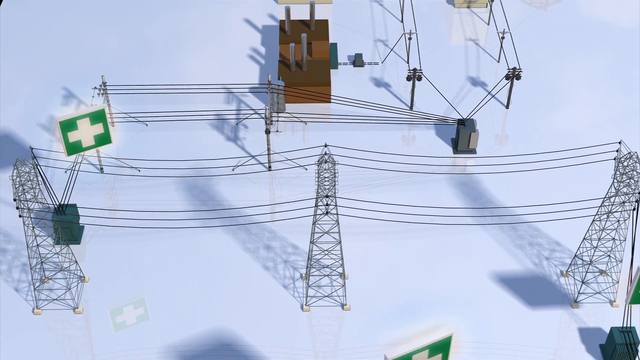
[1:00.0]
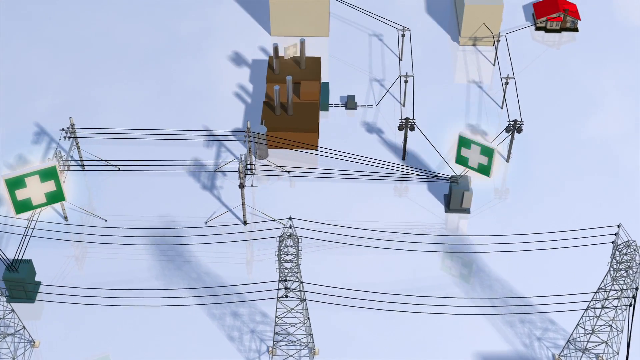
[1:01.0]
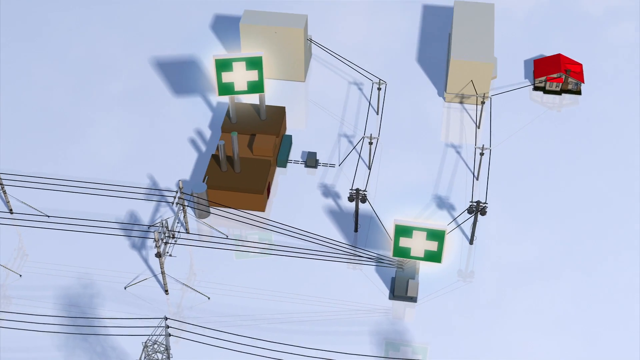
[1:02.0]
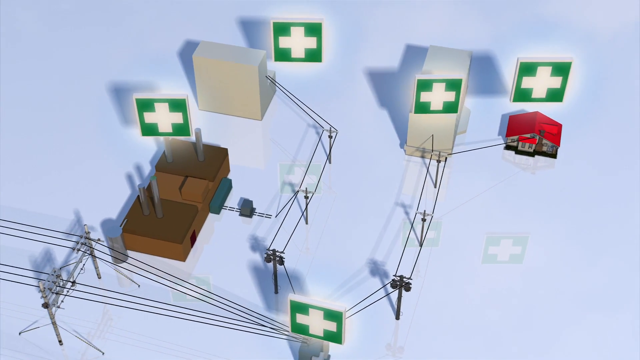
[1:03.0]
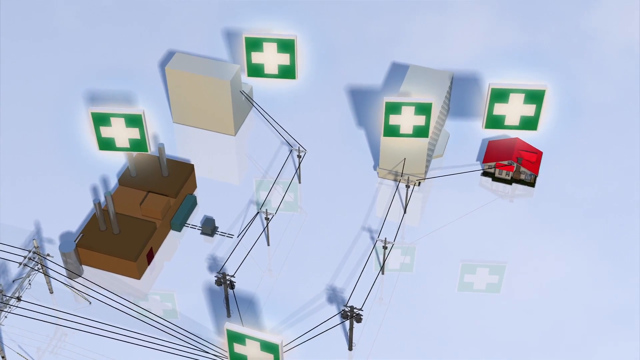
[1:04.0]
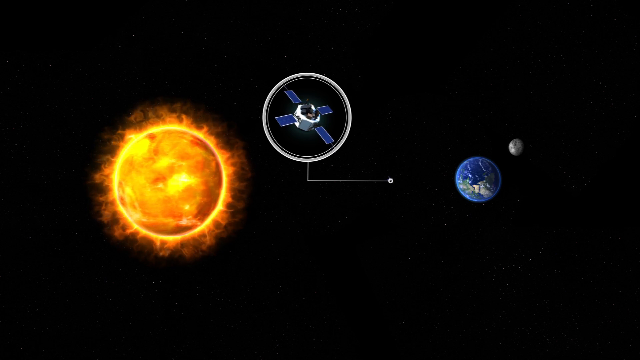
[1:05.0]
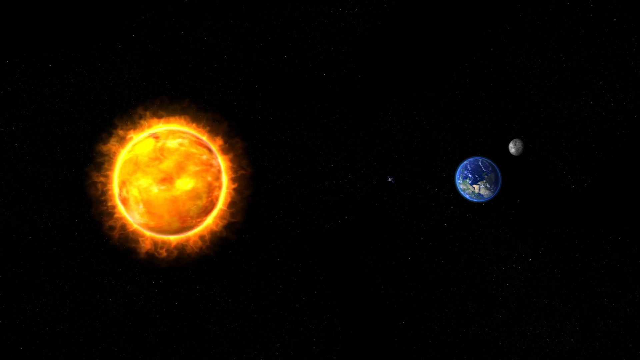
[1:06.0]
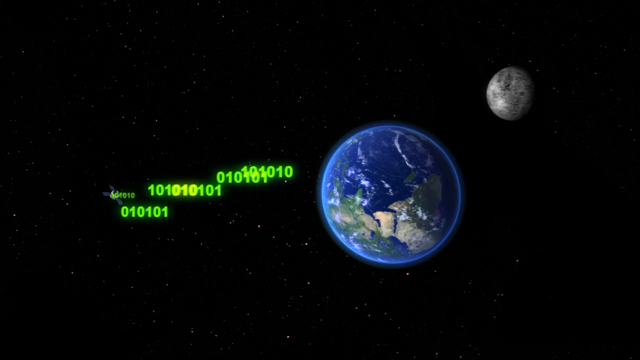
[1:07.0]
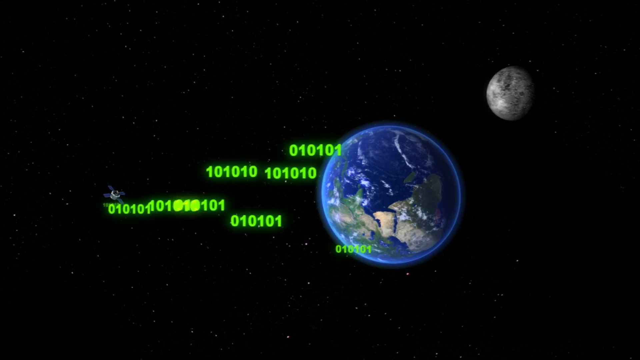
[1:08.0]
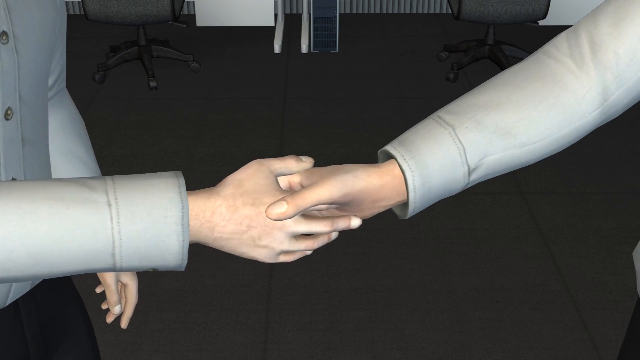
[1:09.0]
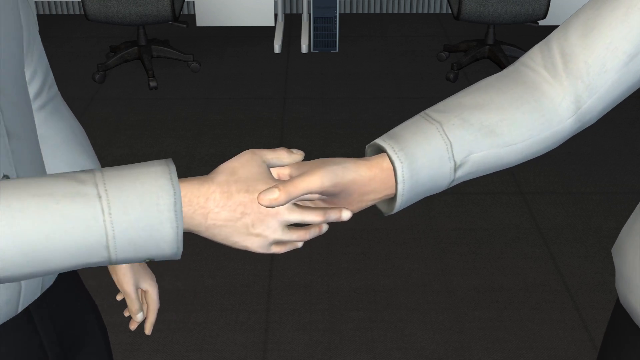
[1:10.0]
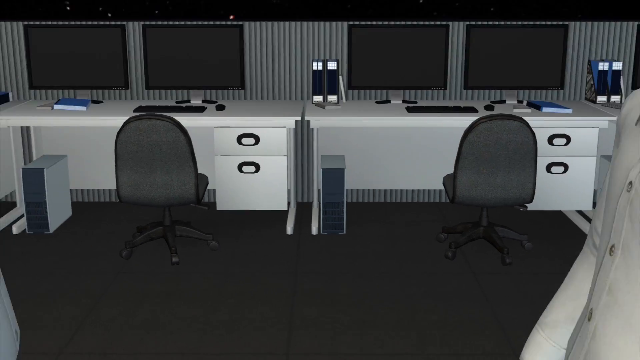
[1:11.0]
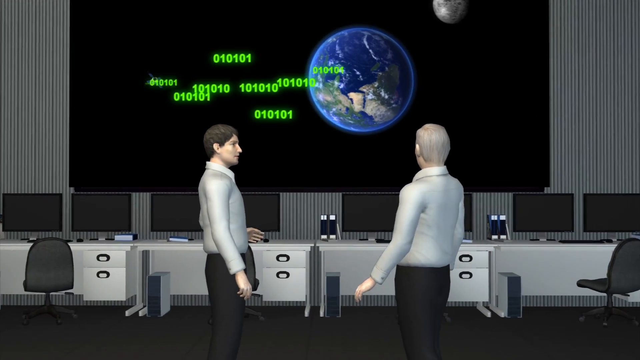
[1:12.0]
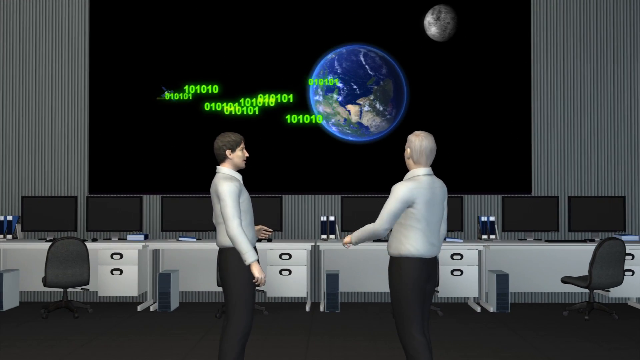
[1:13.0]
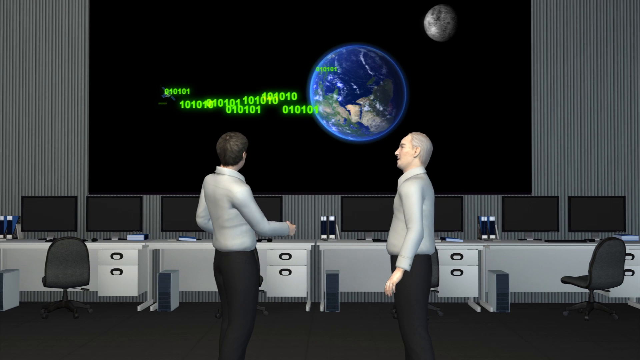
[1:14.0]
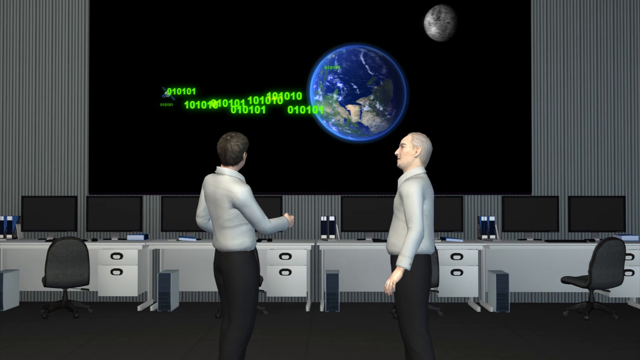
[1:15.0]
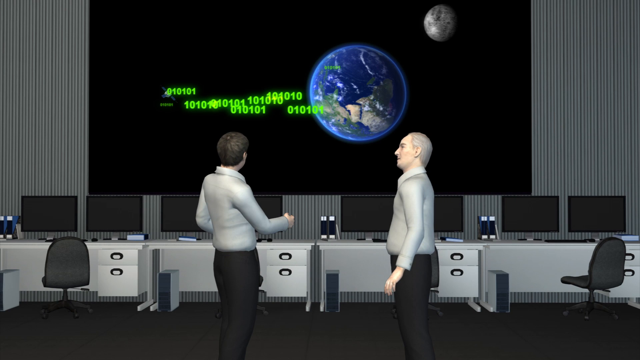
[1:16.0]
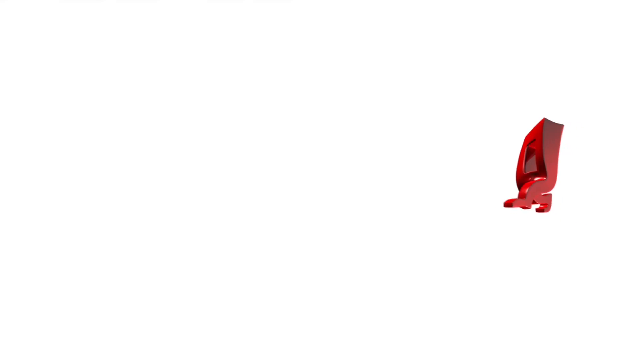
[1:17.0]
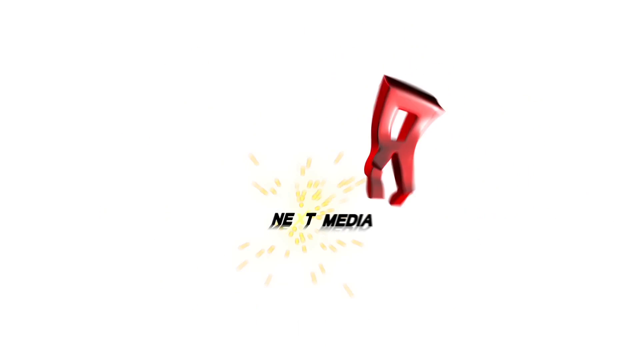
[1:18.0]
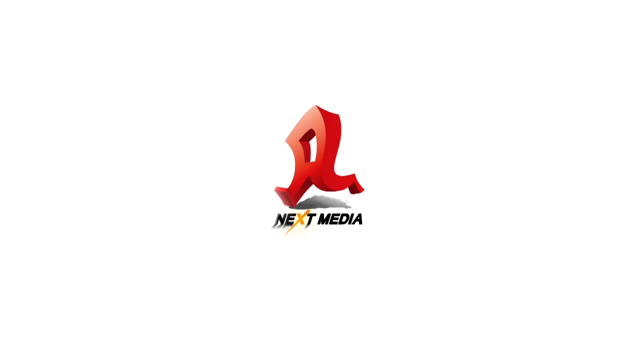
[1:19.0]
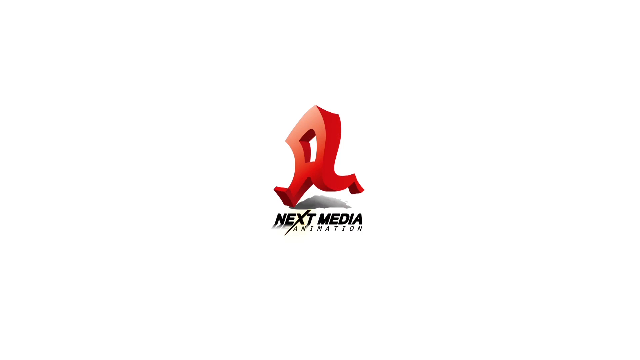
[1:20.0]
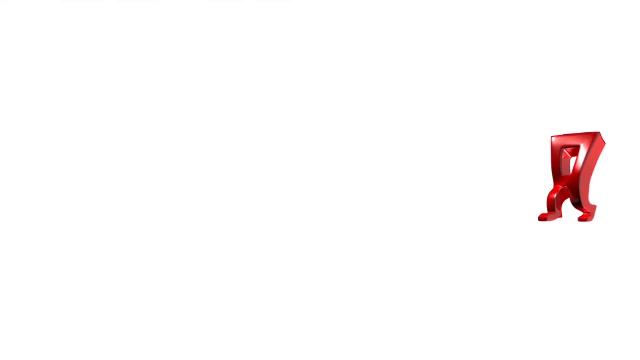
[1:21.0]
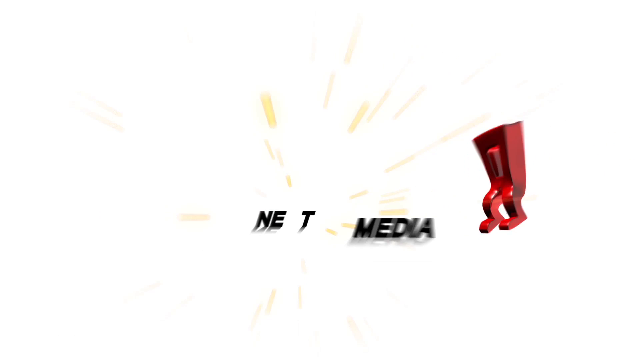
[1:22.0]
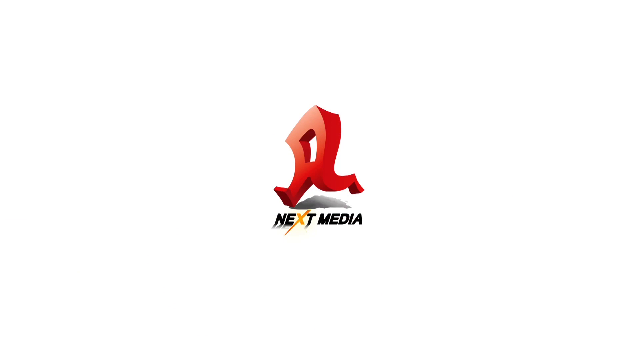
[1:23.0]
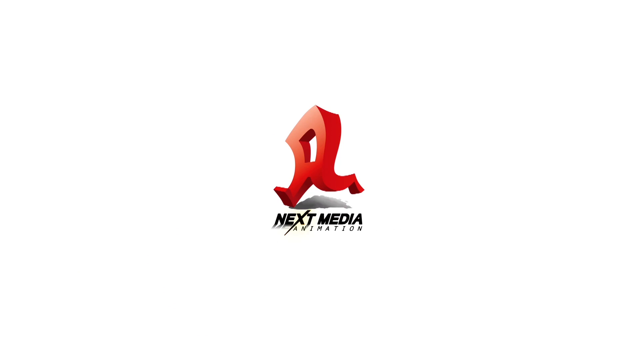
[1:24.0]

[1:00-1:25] Artistically drawn electrical power lines run between larger poles, with shadows of the poles on the ground. Green boxes with a plus sign in them suddenly pop up; they were backwards and now pop up turned around. The sun again sends out solar flares, and numbers, maybe computer code, reading "101010" shoot from the sun toward the Earth. Two digitally drawn men talk to each other and have shaken hands. Then something kind of like a red square with legs runs toward the left of the screen on a white background, with "next media" underneath it. As that finishes, the text reads "next media" again, and the last word shown is "animation".